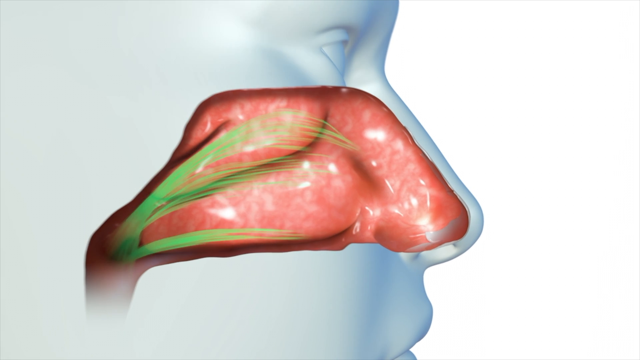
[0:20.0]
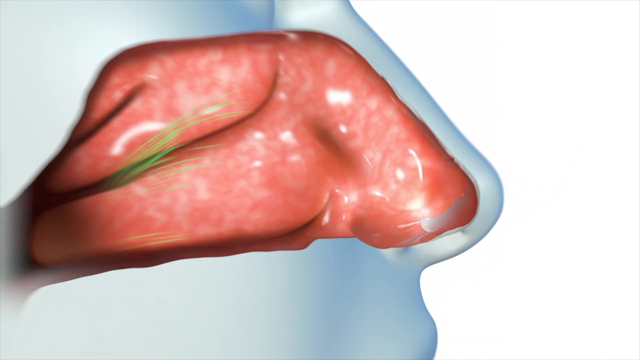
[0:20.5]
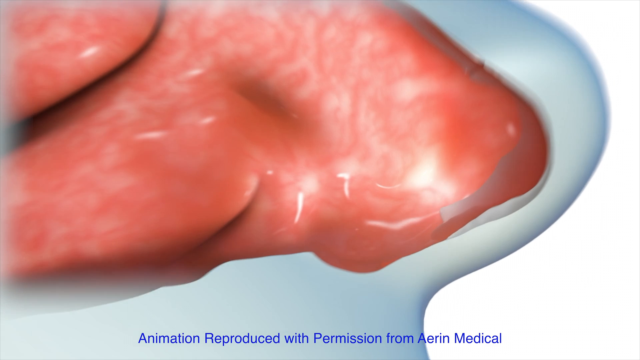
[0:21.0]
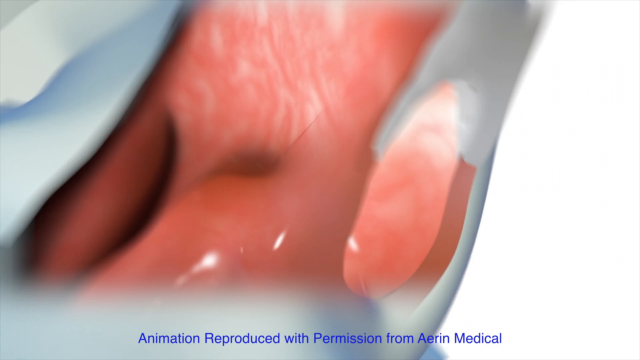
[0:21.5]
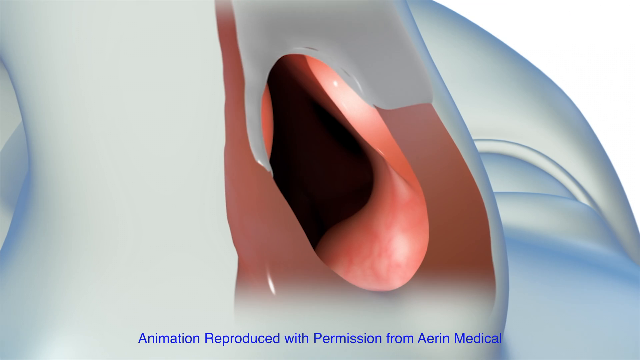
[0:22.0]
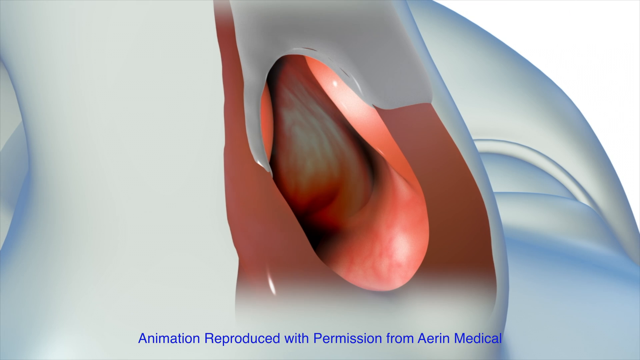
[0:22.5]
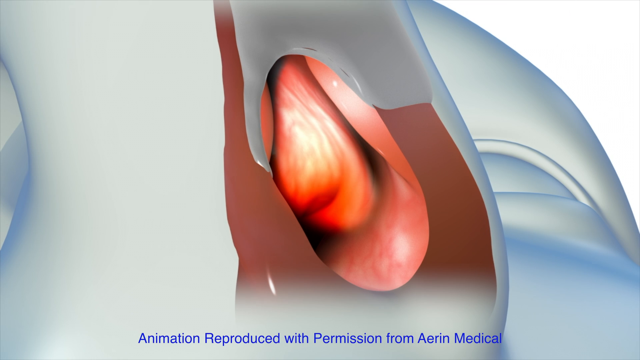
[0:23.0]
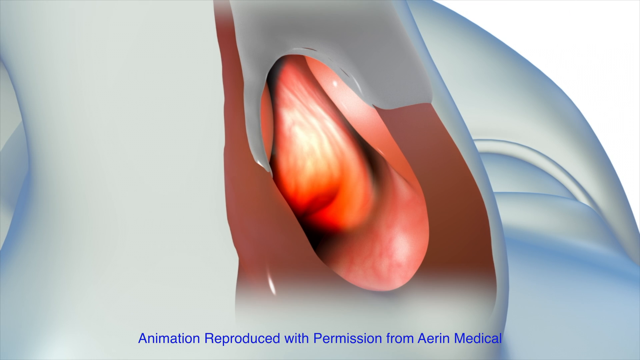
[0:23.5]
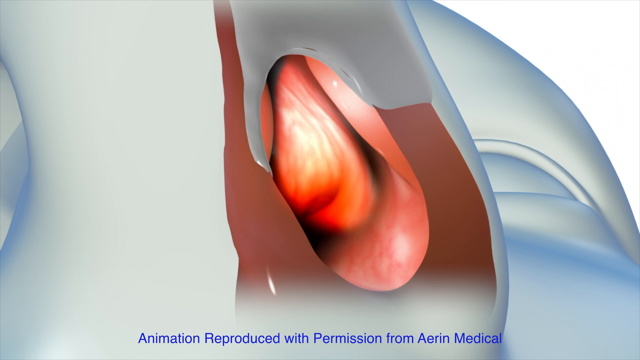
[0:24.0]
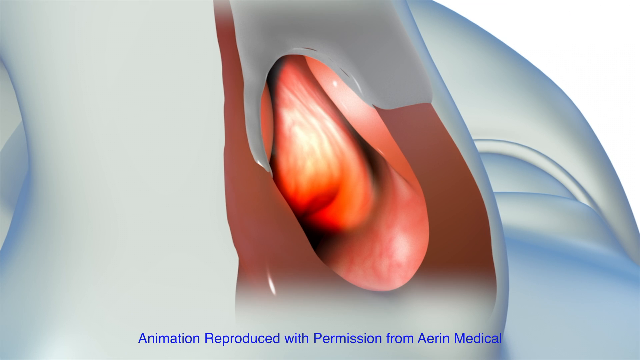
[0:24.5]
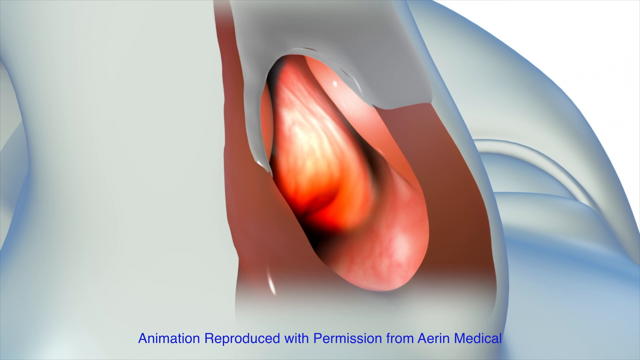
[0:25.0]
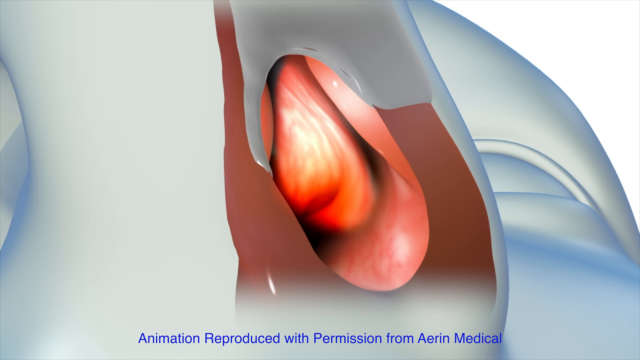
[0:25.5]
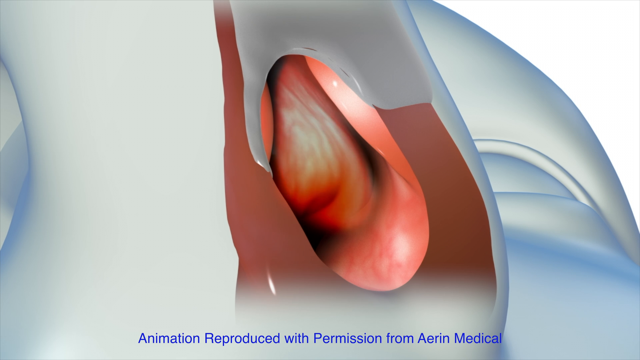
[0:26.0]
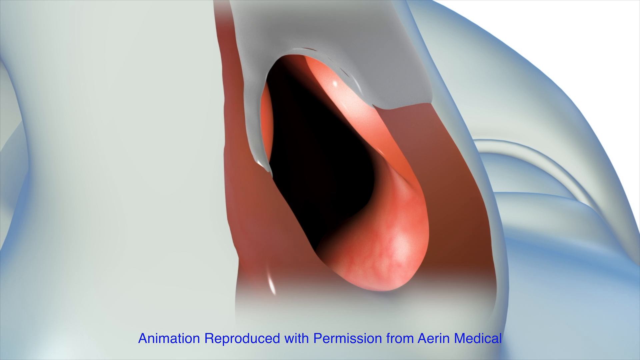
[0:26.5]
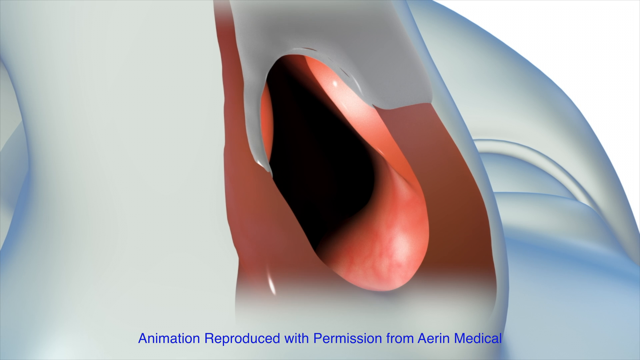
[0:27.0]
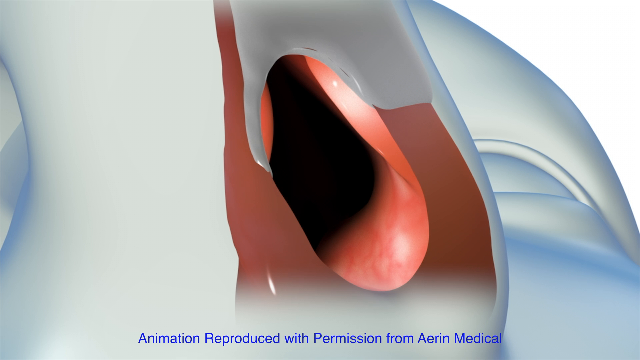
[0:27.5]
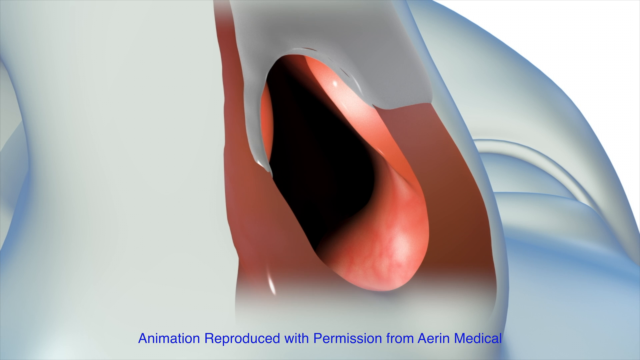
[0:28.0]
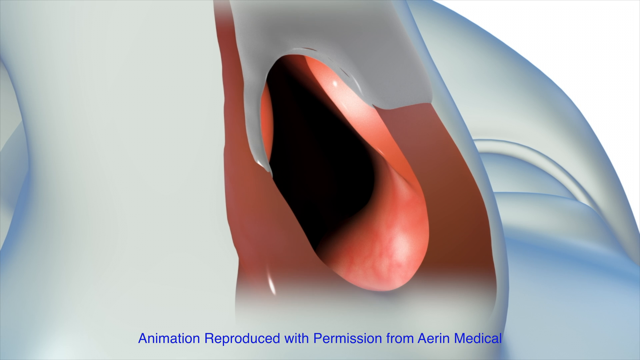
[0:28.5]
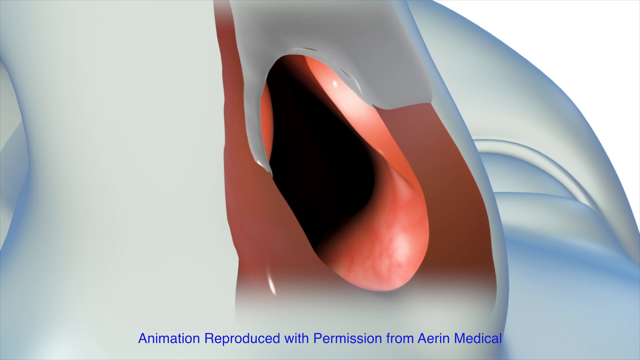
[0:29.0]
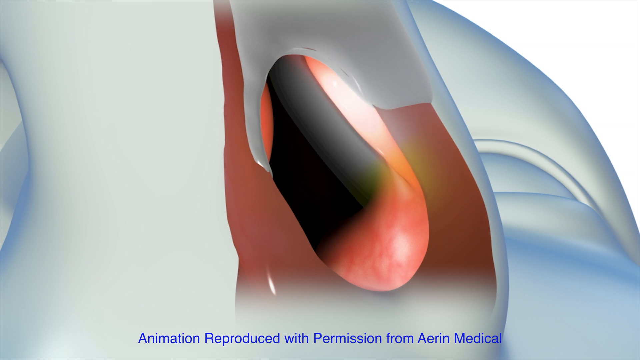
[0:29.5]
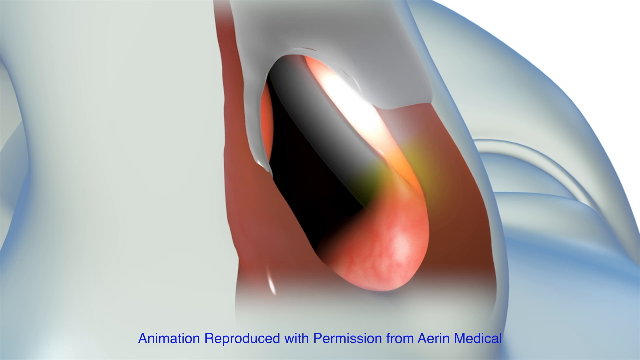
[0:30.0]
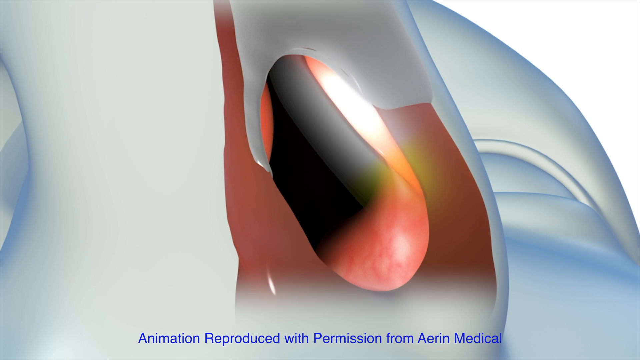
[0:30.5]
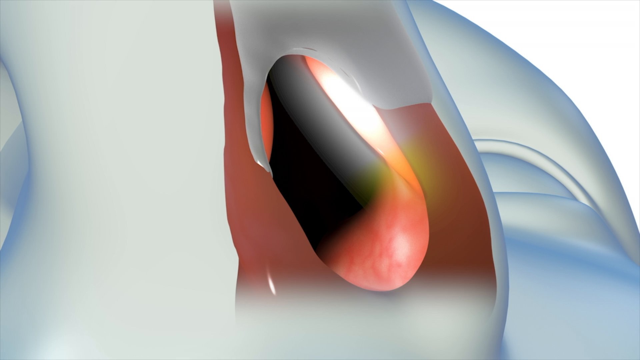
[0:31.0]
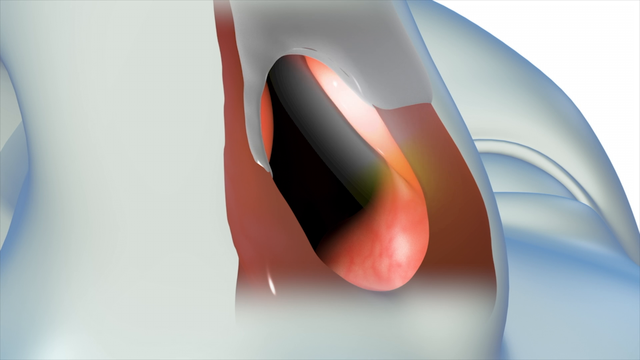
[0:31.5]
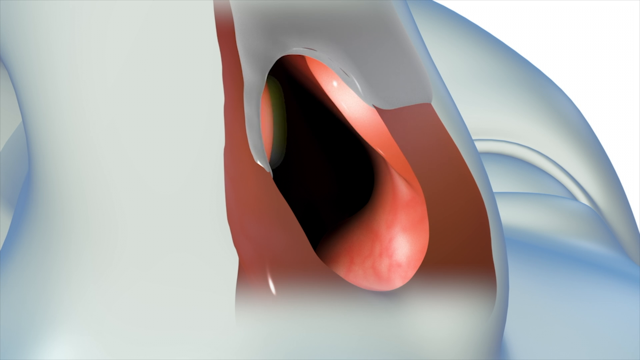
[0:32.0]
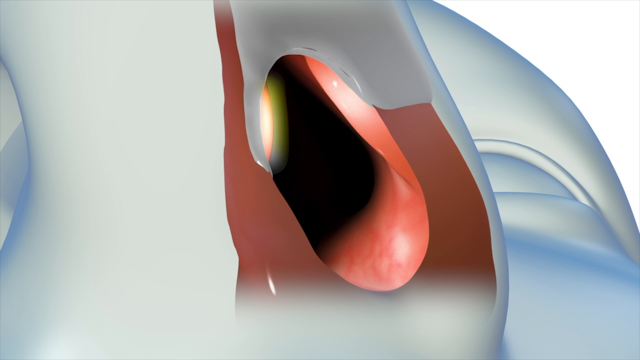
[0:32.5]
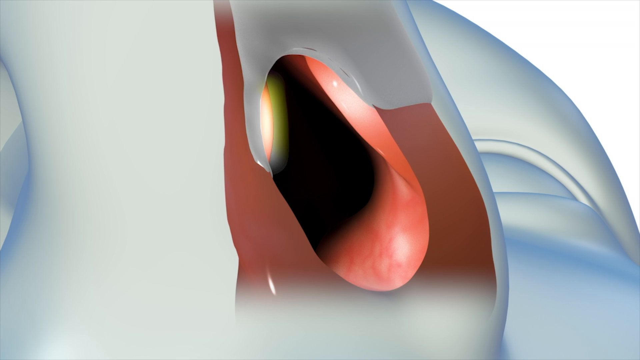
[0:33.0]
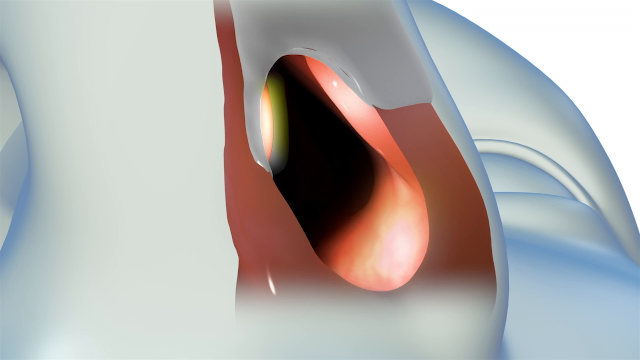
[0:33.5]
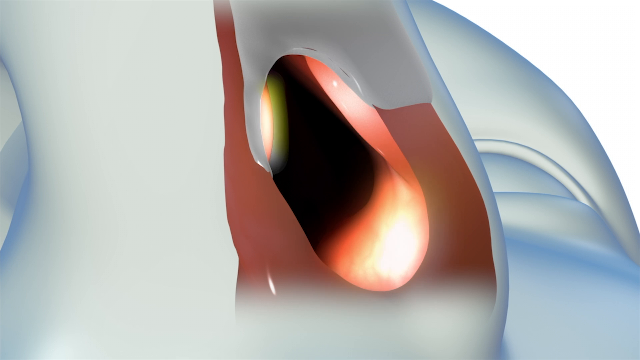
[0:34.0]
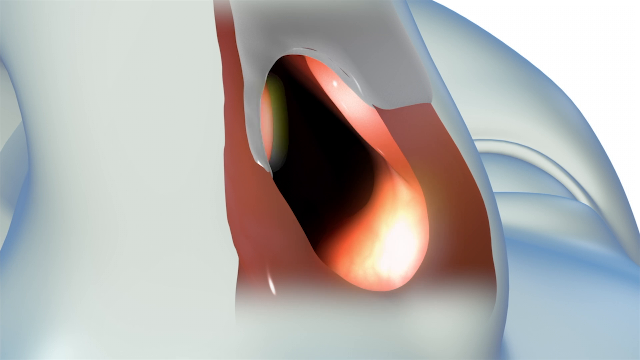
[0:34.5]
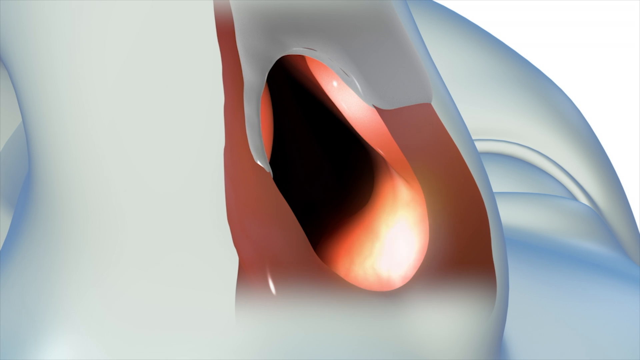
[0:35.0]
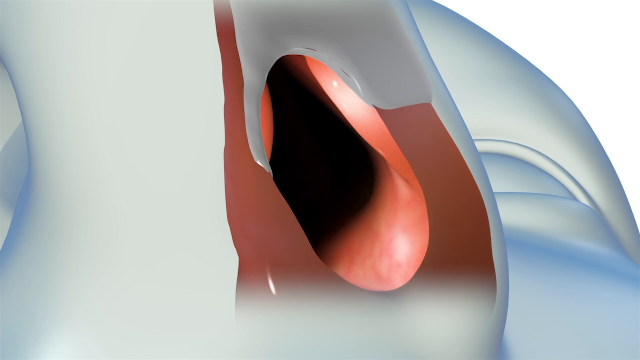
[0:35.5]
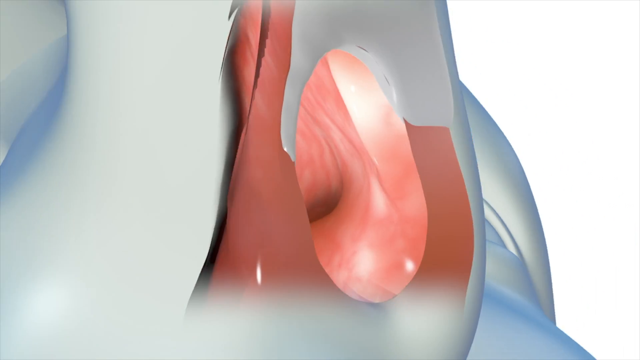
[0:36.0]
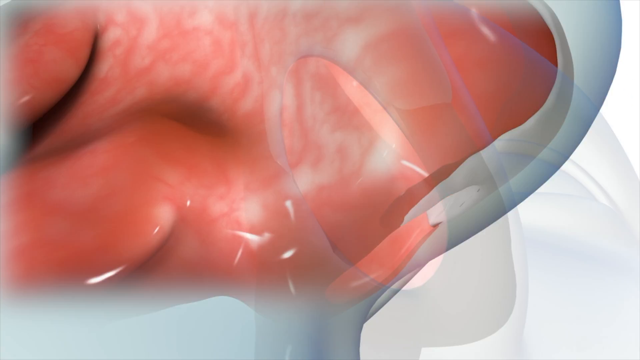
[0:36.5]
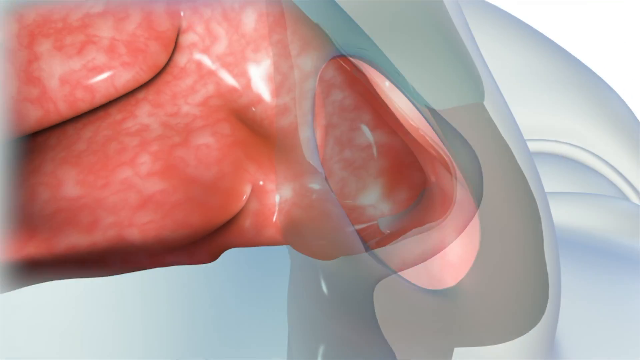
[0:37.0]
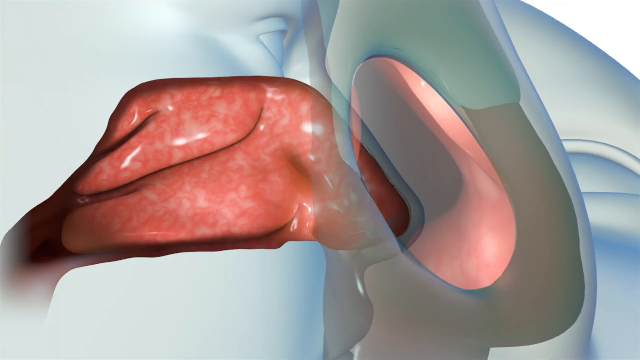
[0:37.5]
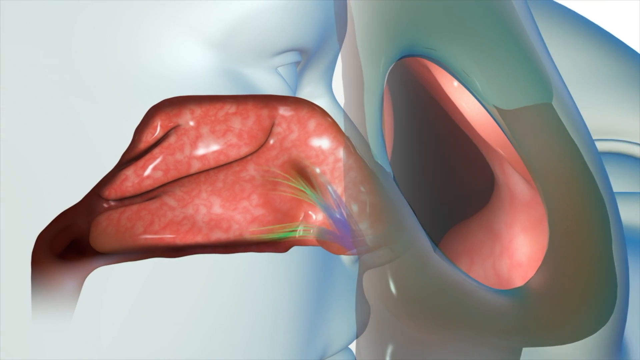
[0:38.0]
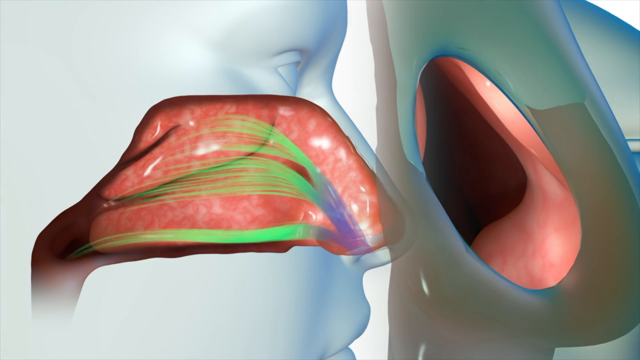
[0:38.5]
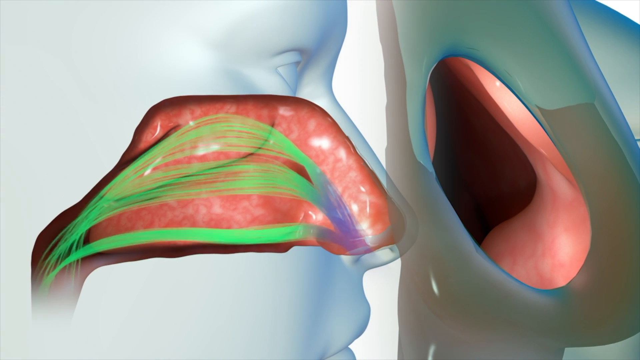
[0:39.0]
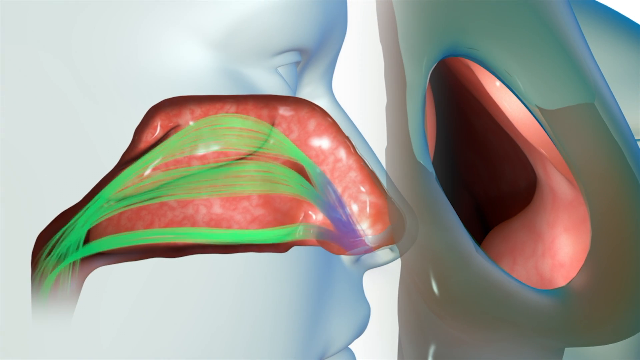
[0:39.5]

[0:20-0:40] The model is shown from the left side, zoomed in on the nasal passages. The camera zooms in very close onto the nose, then rotates down and to the left until it points directly up into the nasal passage. The inside of the passage is visible through the right nostril, and more detail gradually draws in. The center is dark, and a lightened white section appears on the top right side of the nasal passage. This fades out, and then the left side and the bottom right of the passage light up. The camera rotates back to its original position looking at the side of the face and zooms away from the nose to the original view. The blue and green lines reappear, animate the same way as before, and gradually begin dissipating.